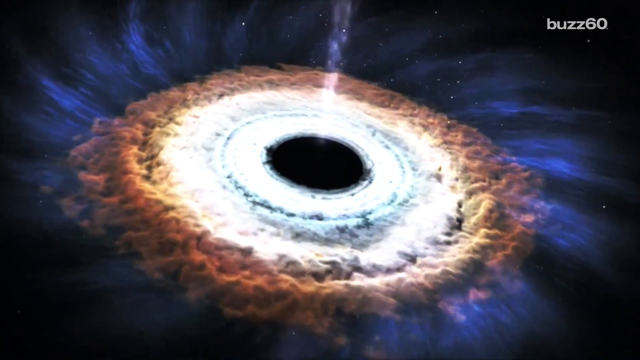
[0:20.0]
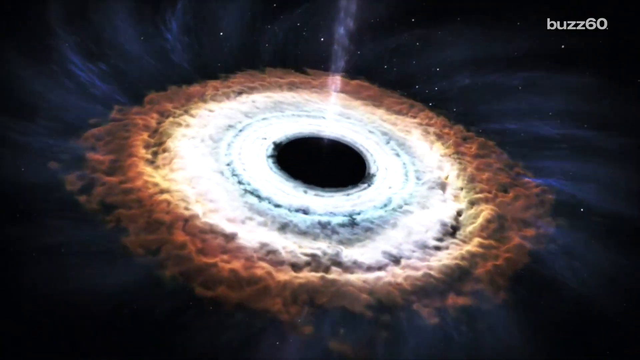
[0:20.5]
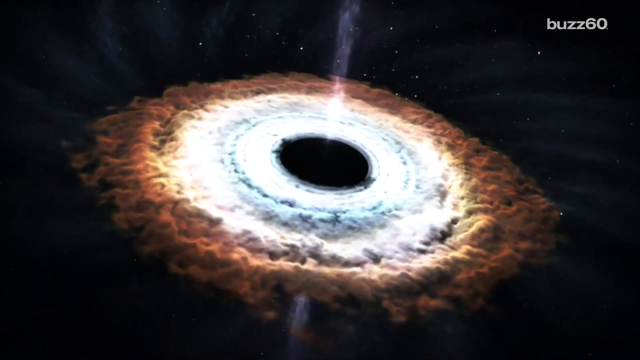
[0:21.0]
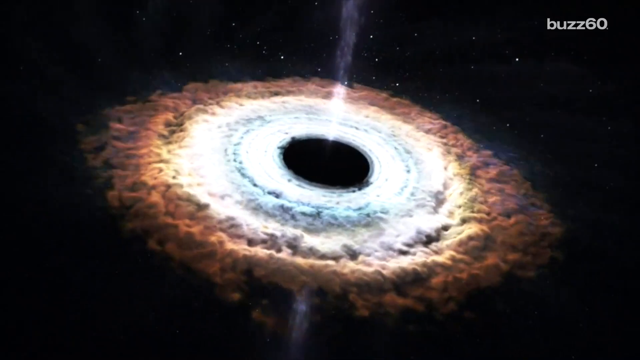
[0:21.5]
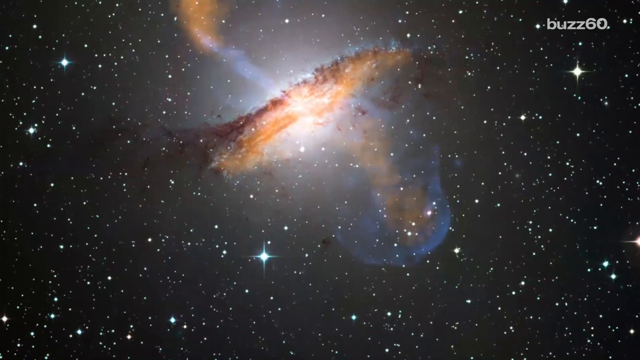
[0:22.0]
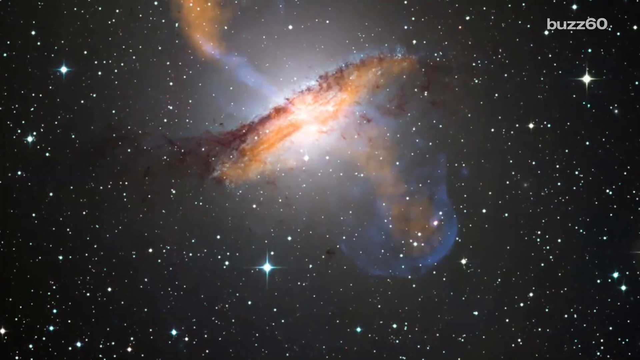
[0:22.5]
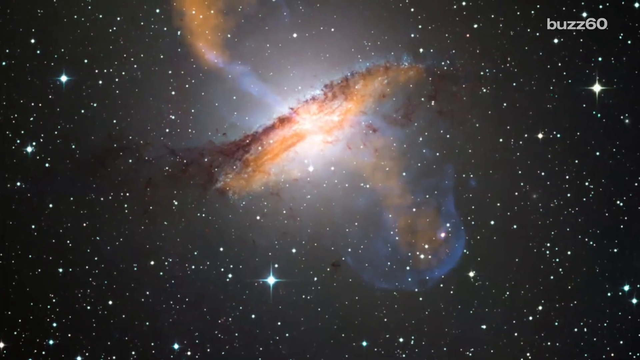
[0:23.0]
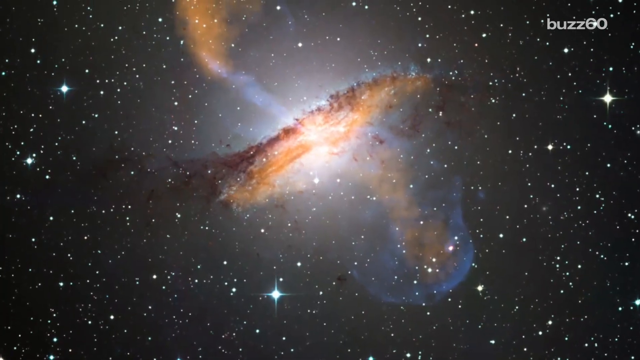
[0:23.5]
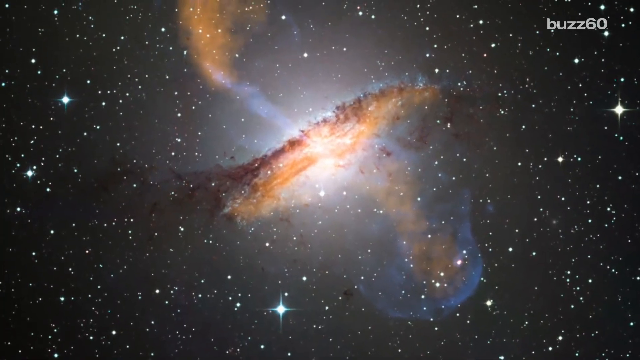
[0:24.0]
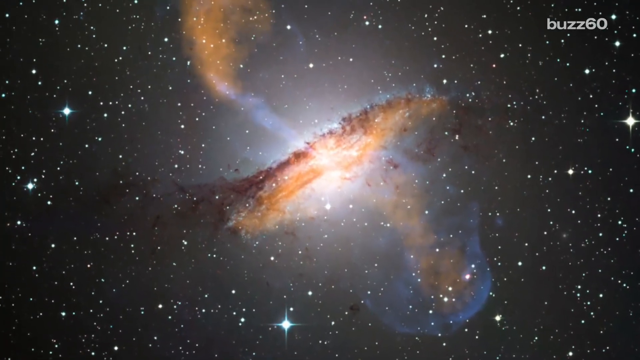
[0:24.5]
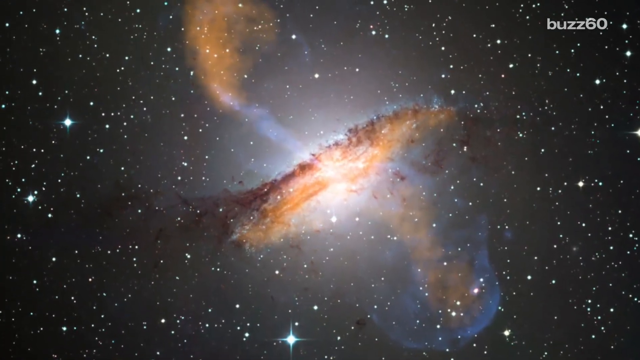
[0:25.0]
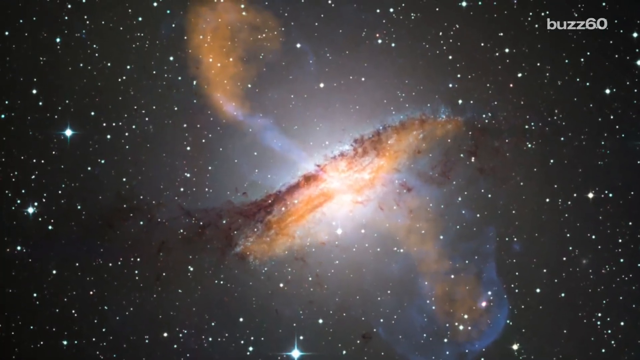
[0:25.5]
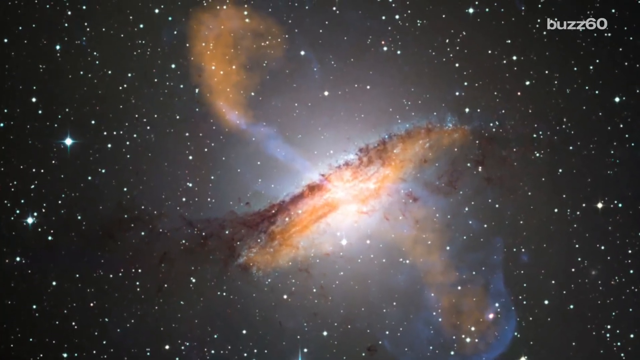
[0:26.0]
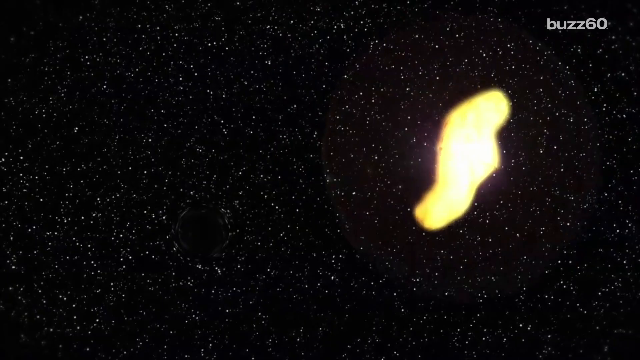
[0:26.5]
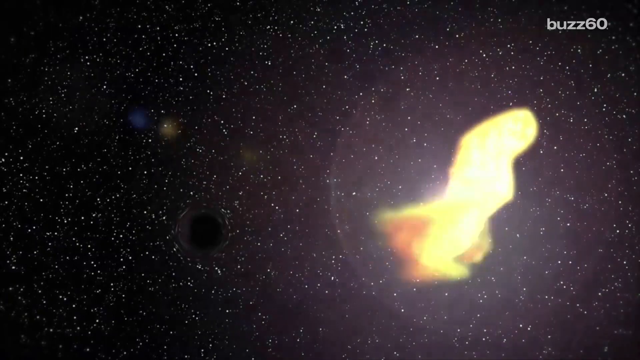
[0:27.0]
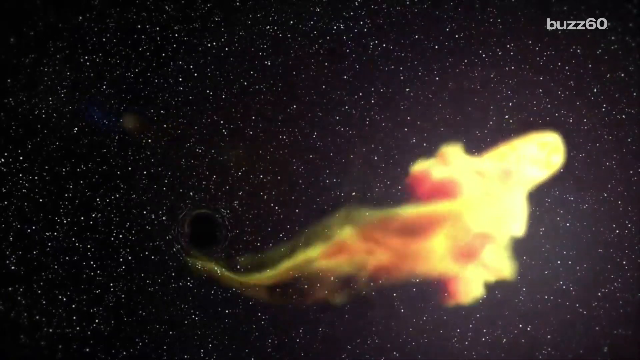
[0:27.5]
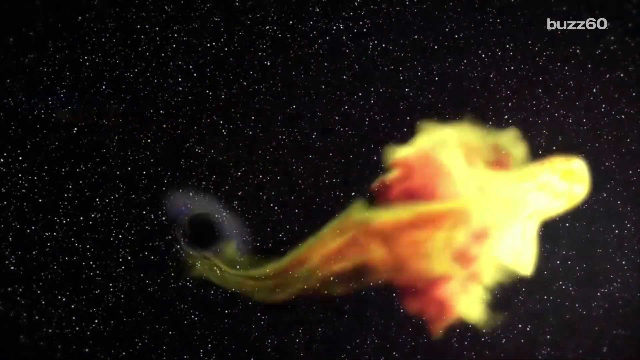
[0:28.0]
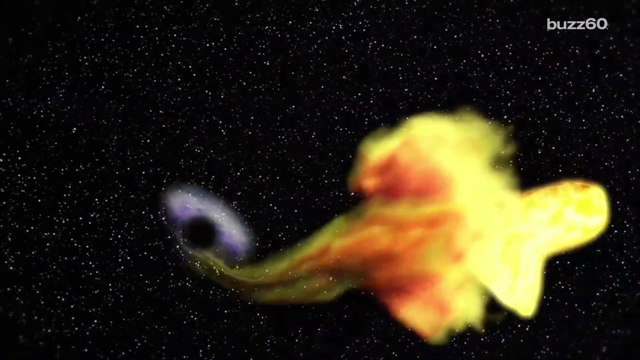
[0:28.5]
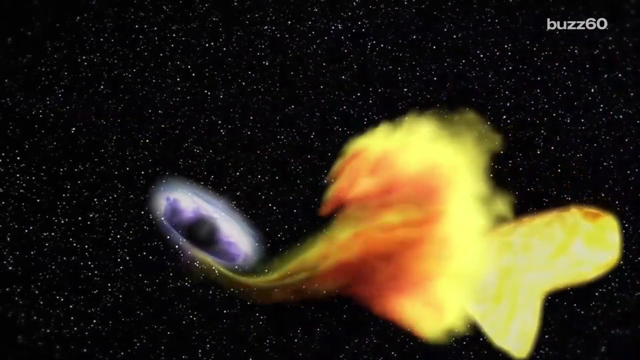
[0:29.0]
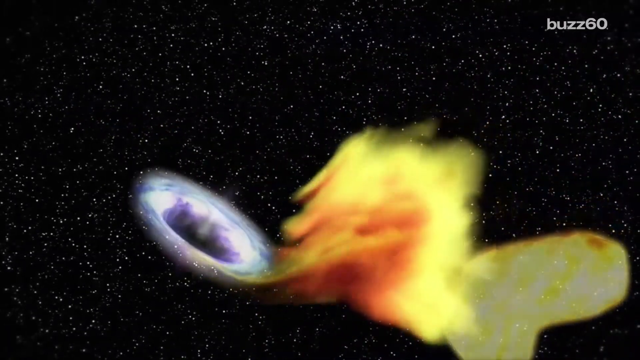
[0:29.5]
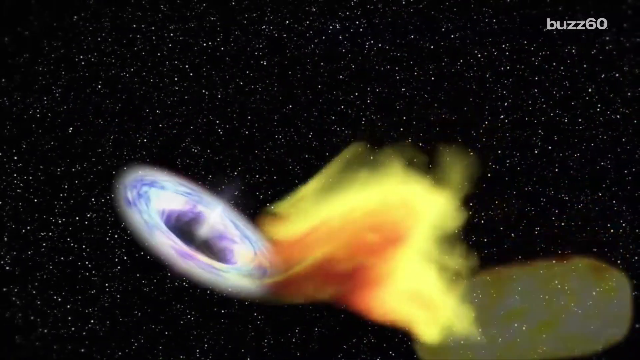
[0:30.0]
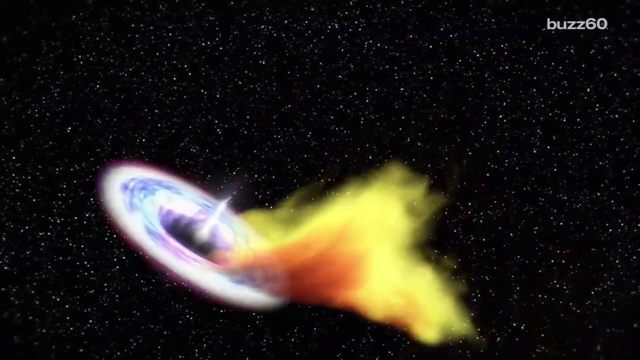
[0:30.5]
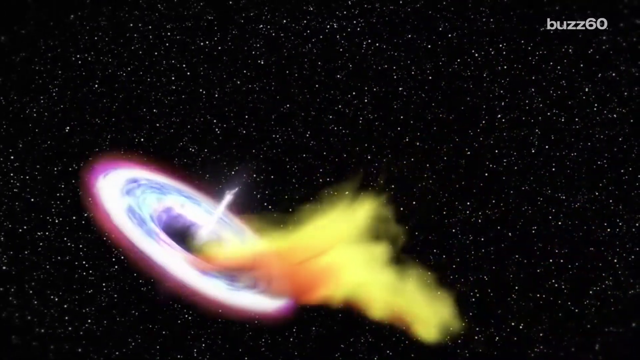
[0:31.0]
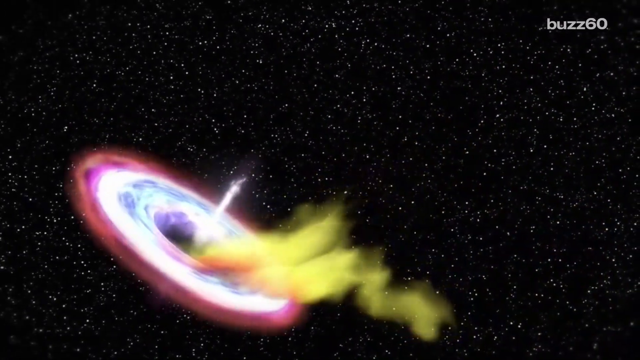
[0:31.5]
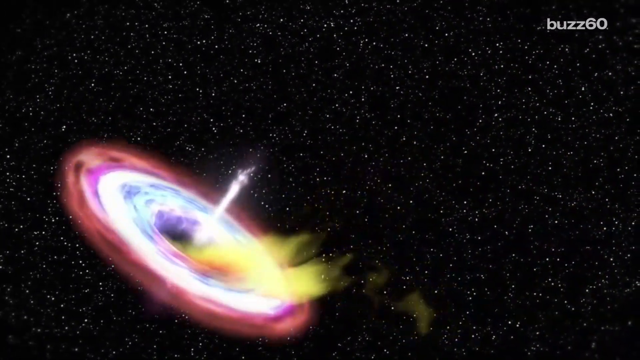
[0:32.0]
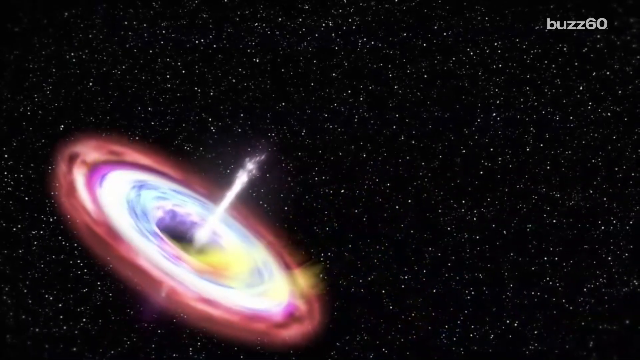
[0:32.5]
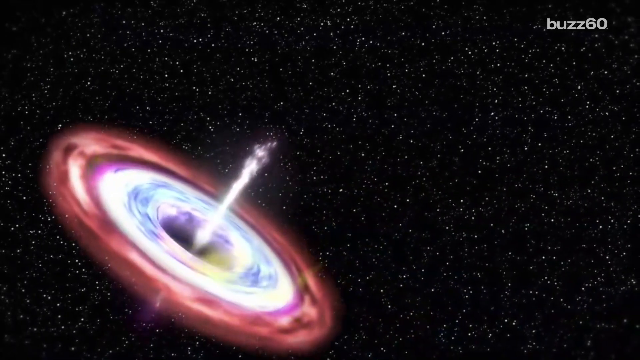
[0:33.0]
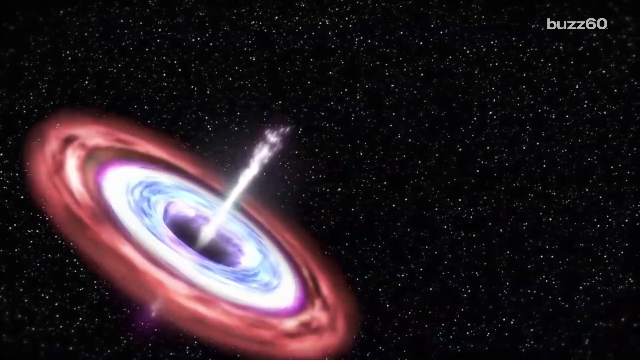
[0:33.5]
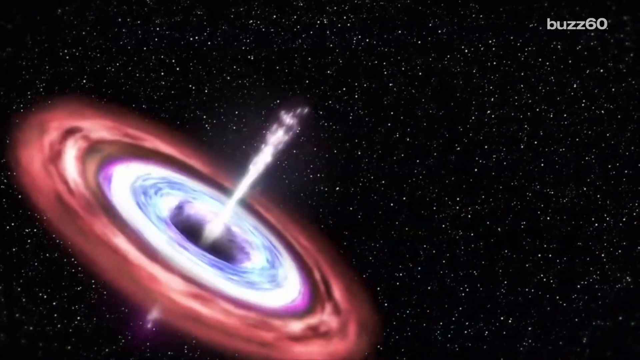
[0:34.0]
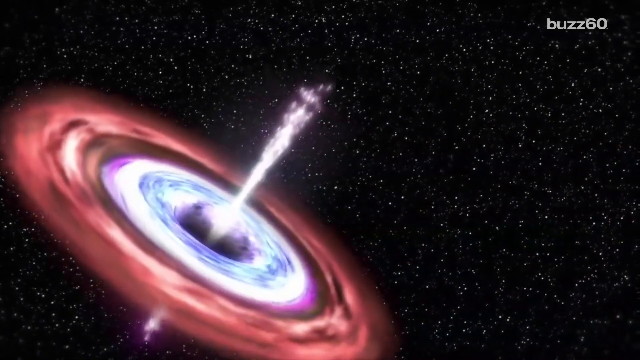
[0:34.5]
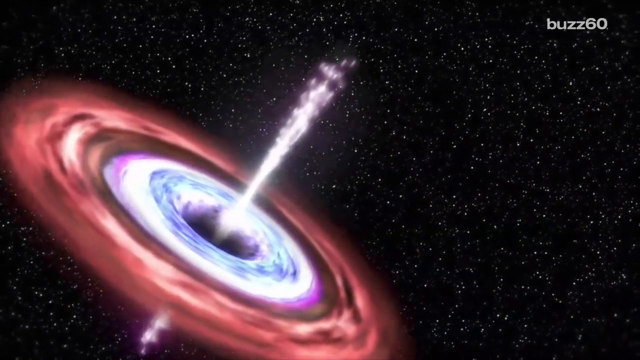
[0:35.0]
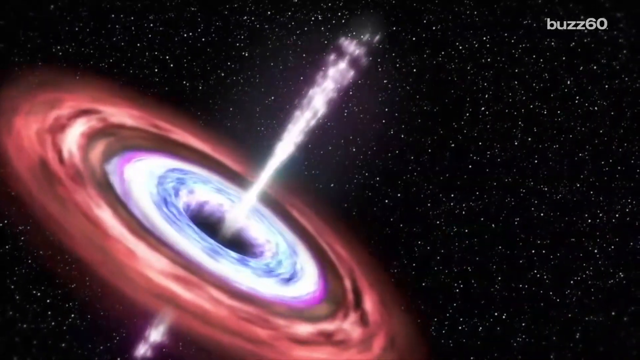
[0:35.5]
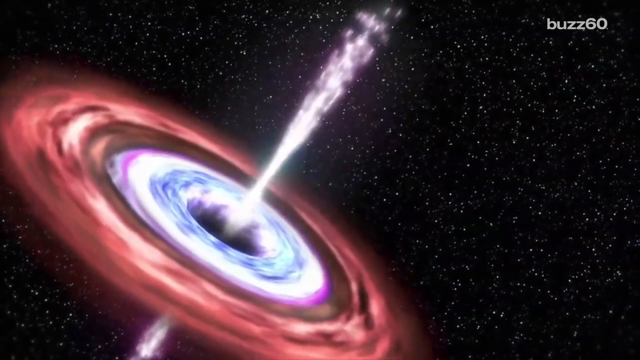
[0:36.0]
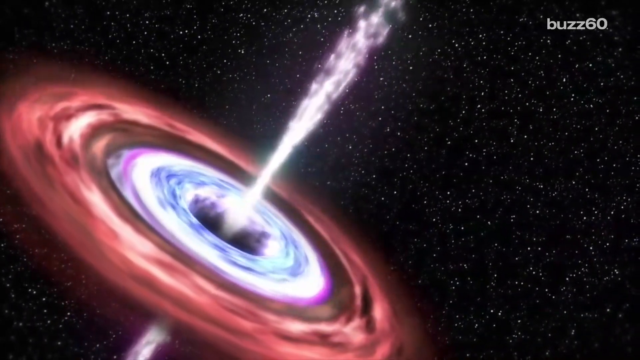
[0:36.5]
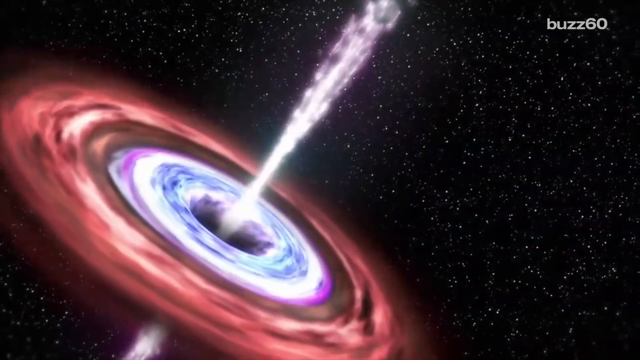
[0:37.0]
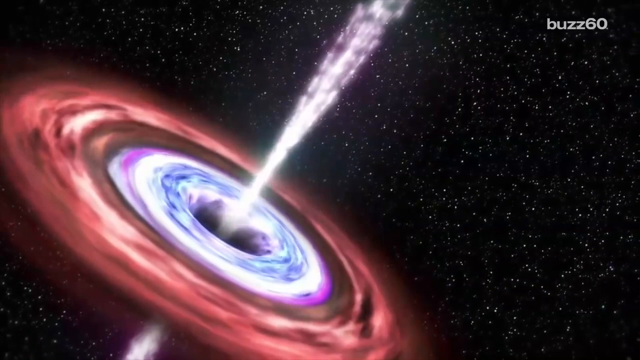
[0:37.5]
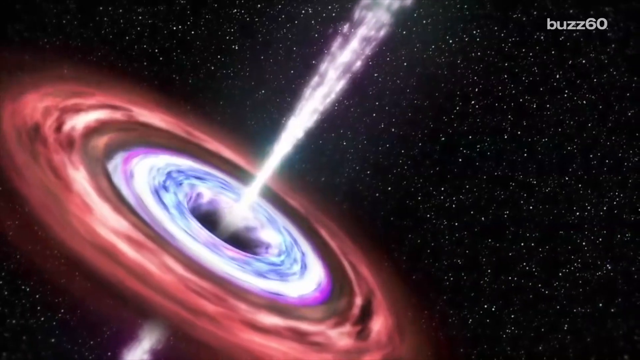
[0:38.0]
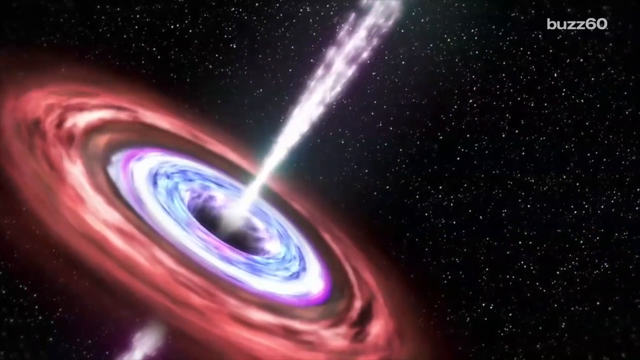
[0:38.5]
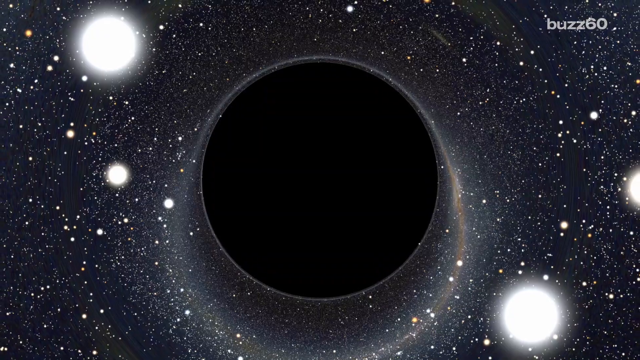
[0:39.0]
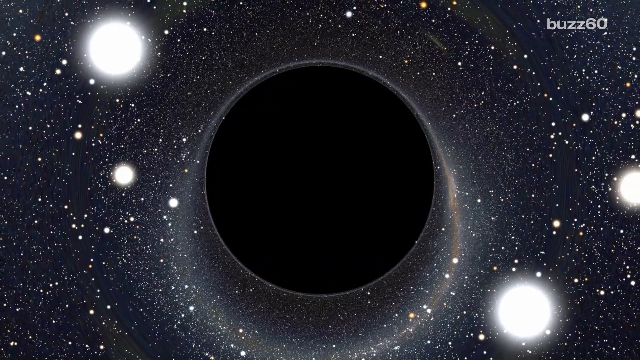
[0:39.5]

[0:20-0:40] The swirling dark-hole-style phenomenon in space remains in focus as it radiates purple energy out from the very edge of its outer orange ring, which then fades. The video cuts to another shot of space that appears to show another galaxy; the view moves up and to the left so the galaxy is centred. Then it cuts to another starfield as a yellow object similar to the earlier comet-style object appears on the right. It becomes more gaseous, and the gases appear to rush into a black circle forming in the bottom left of the screen, which seems to transform into a black hole growing larger, with white rings and further orange rings beyond, as the remnants of the yellow energy are absorbed. It then expands outwards and appears to emanate white energy from its centre up to the top of the screen. This black hole is angled, higher on the left-hand side and lower on the right, disappearing off the bottom middle. The video then cuts to another shot of space with a large black hole in the centre, viewed straight on so that it is a perfect circle.